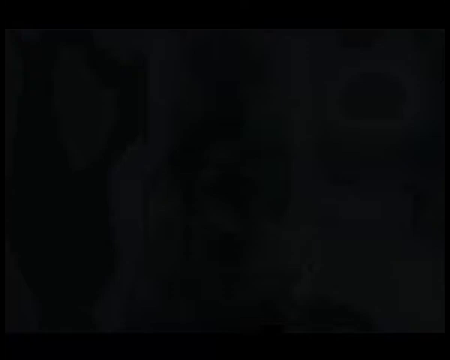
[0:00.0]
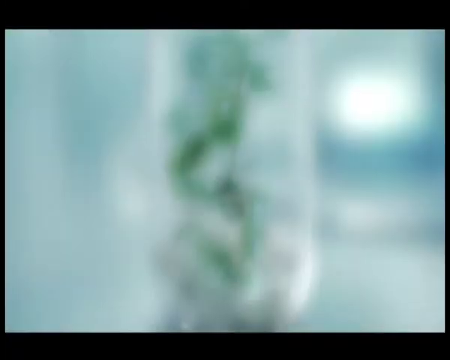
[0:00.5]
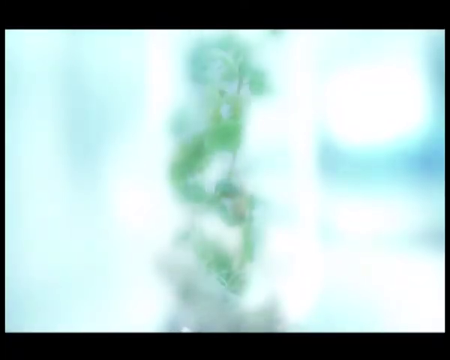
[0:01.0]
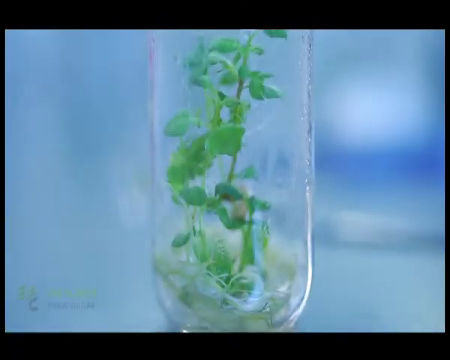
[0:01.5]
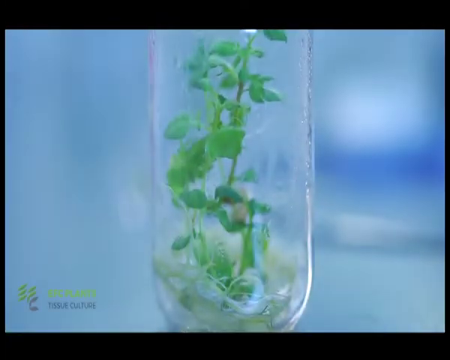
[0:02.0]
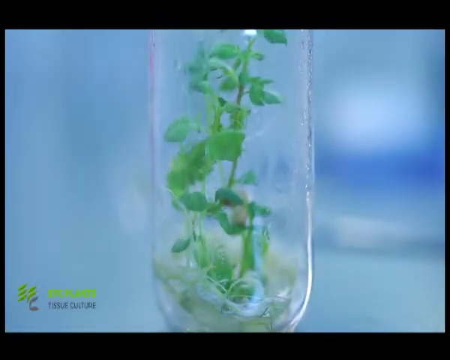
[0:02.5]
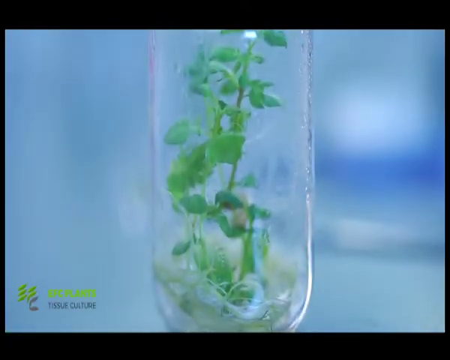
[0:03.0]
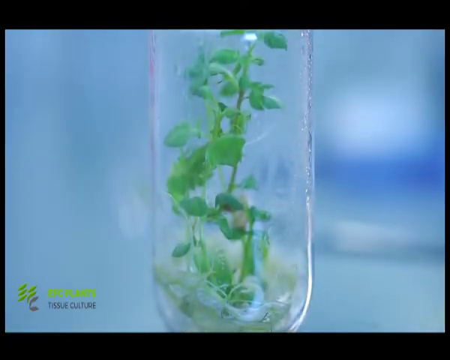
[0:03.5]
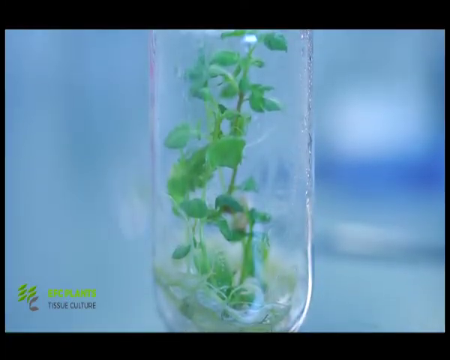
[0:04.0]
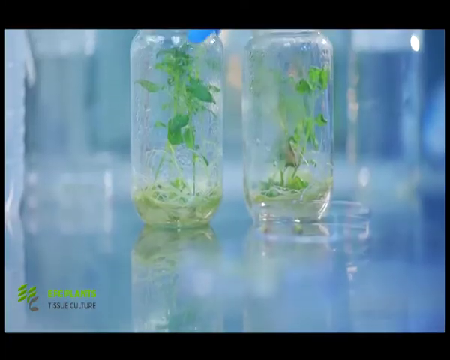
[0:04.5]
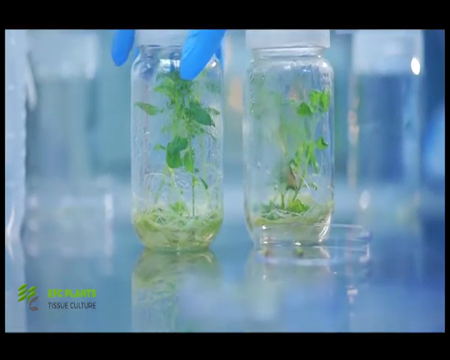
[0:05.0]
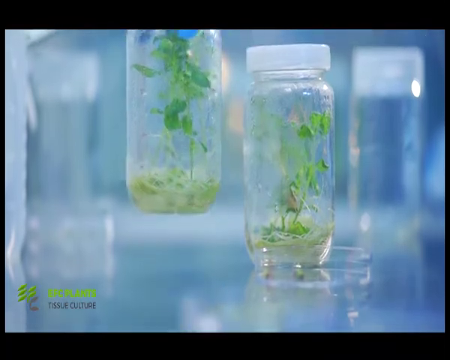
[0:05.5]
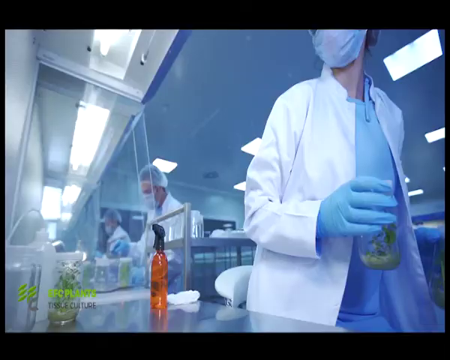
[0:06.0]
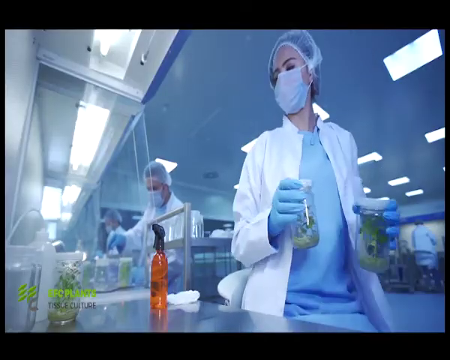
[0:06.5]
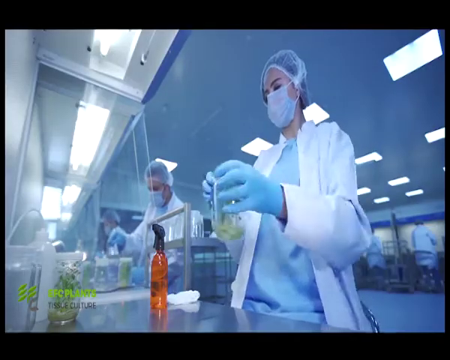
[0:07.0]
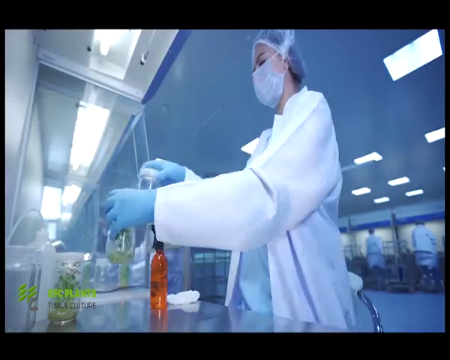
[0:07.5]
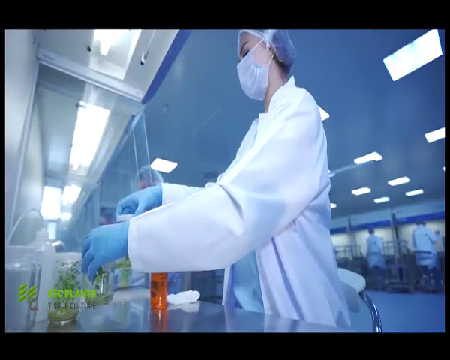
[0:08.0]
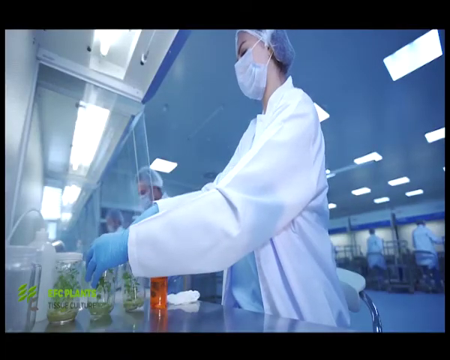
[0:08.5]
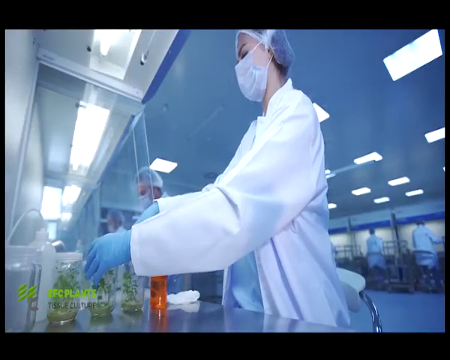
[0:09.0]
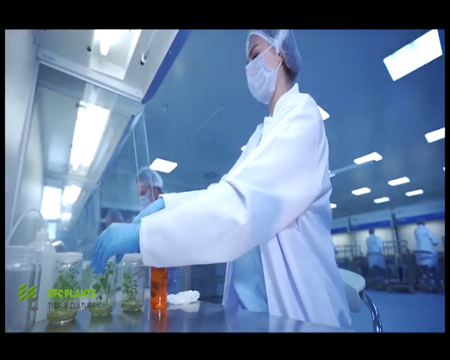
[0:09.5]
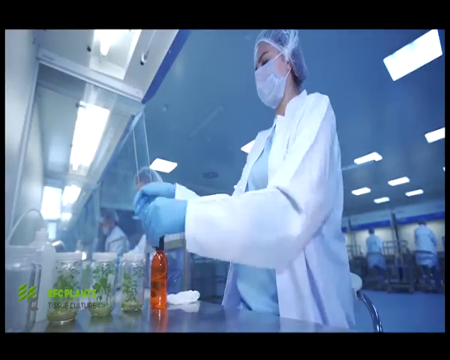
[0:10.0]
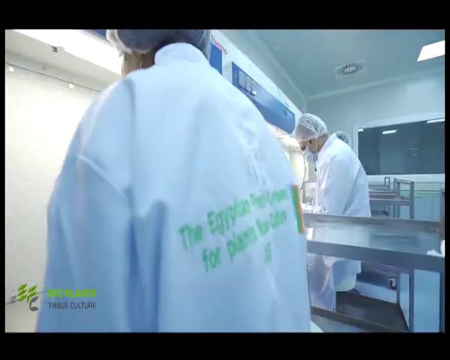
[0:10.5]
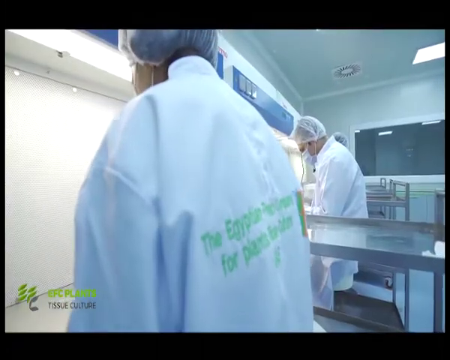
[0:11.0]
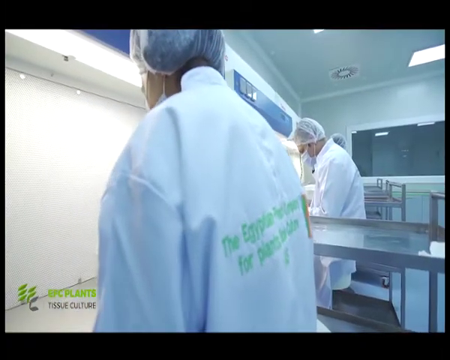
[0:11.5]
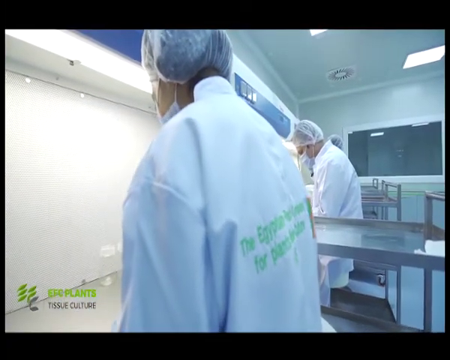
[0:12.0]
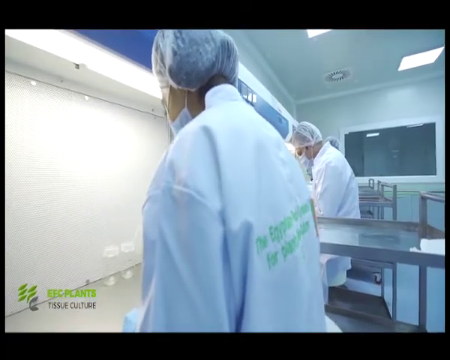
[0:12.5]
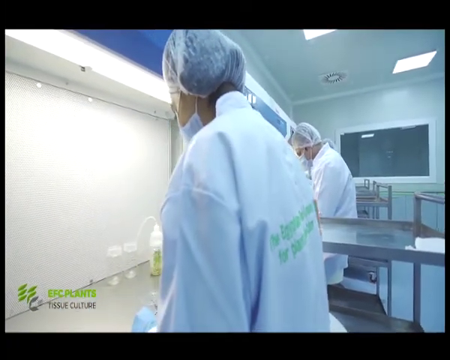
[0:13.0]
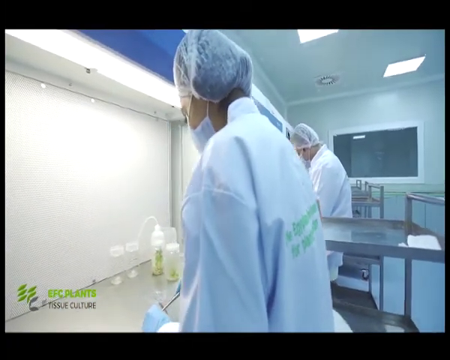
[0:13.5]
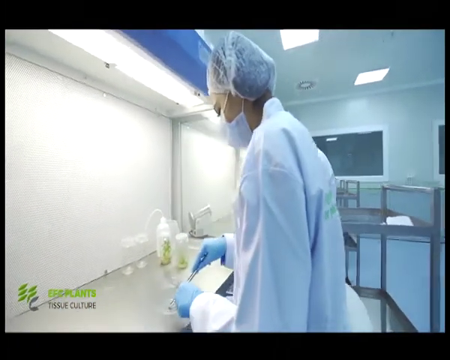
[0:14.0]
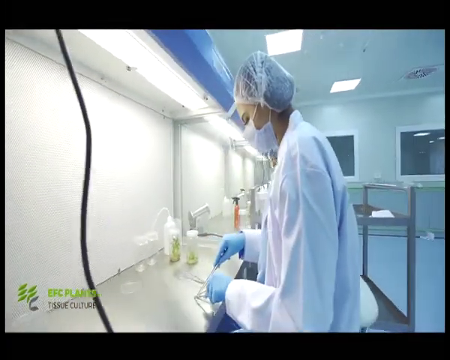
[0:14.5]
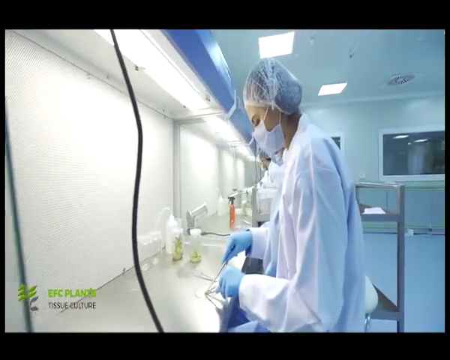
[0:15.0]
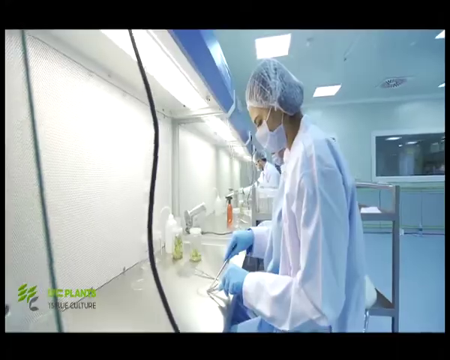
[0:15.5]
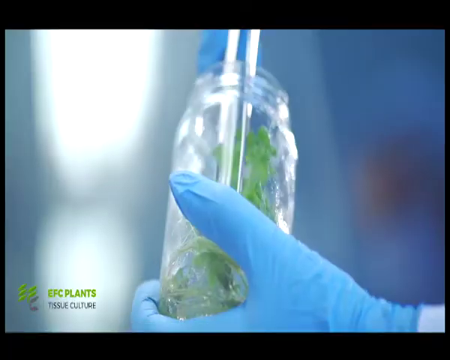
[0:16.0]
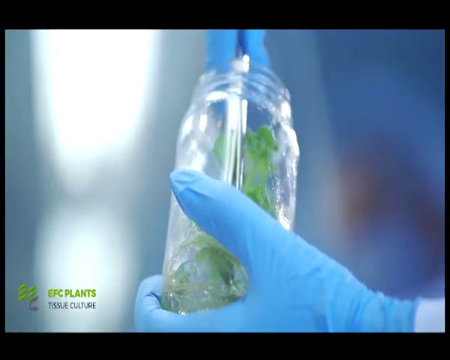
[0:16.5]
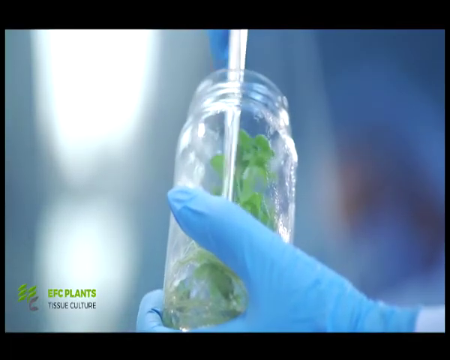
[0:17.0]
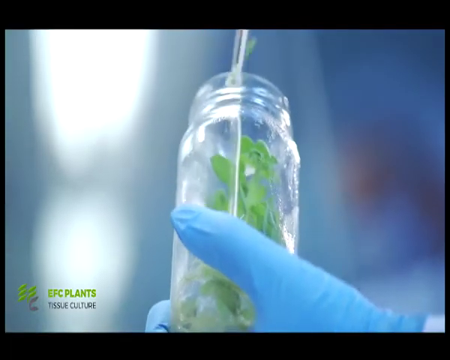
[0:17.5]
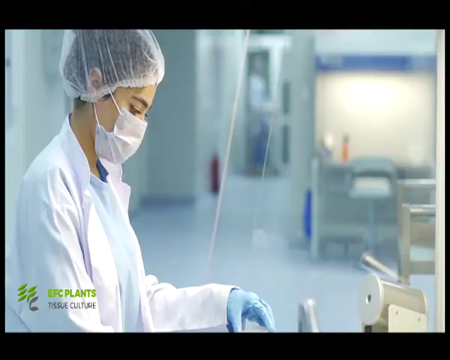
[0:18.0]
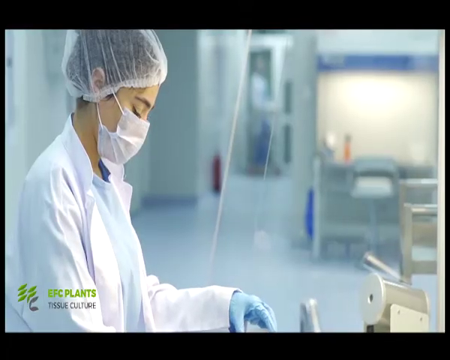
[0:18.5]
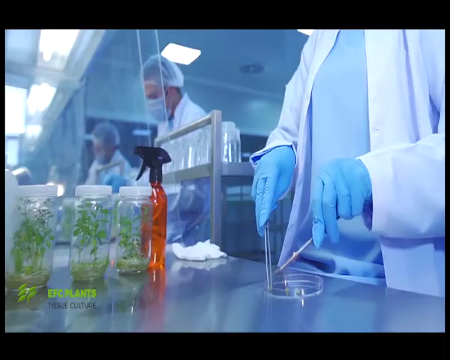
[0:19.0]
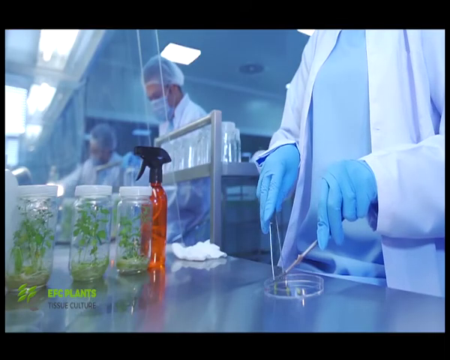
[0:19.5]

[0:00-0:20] A green plant grows inside a glass jar with a white lid. As the camera pans out, two jars come into view, plus one more jar that is empty, making three jars in all. The first jar on the left, with the green plant, is picked up. A person dressed in a white lab coat, blue gloves, a mask and protective hair covering is working in a laboratory. Two more people are to the left, and two others are in the background on the right side. On the table in front of the scientist is a tall orange sprayer bottle. She puts the glass jar on the table in front of her. A different view of the room shows two people, also dressed in lab clothes, working with what looks like long metal tweezers. A closer view of the jar with the plants follows: a piece of the green plant is pulled out with a pair of tweezers and then put in a petri dish.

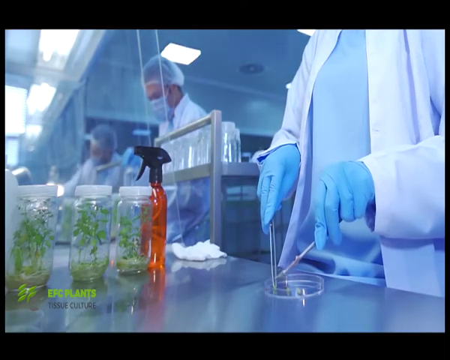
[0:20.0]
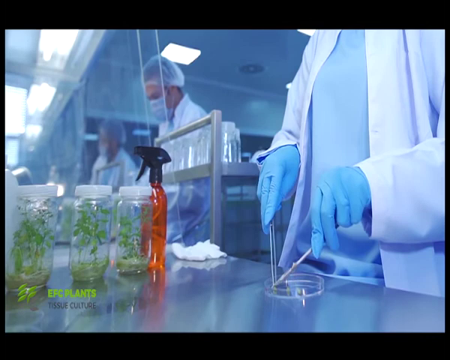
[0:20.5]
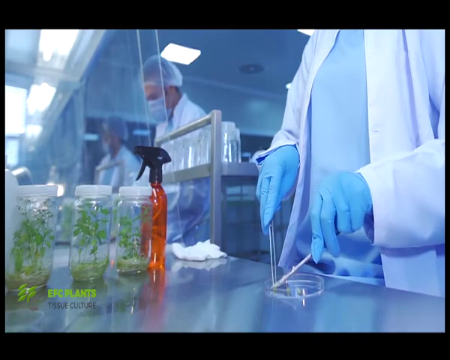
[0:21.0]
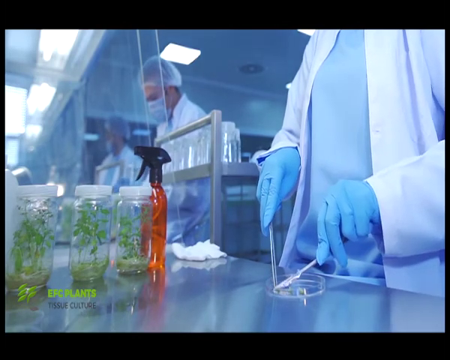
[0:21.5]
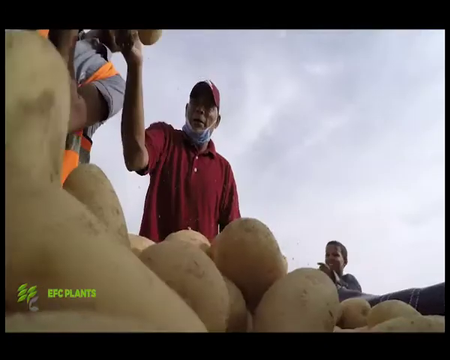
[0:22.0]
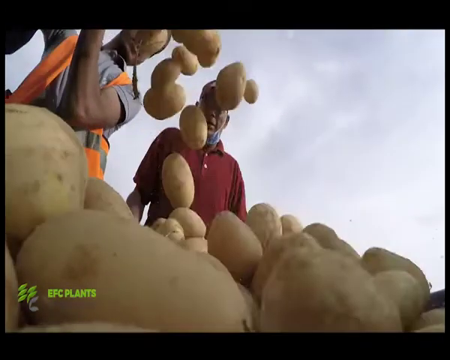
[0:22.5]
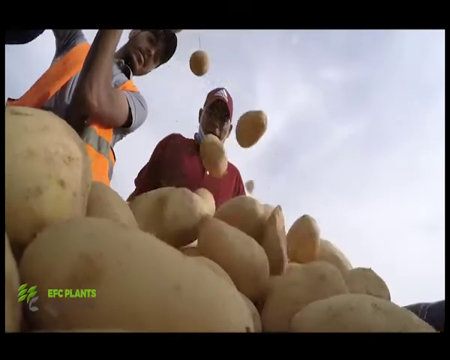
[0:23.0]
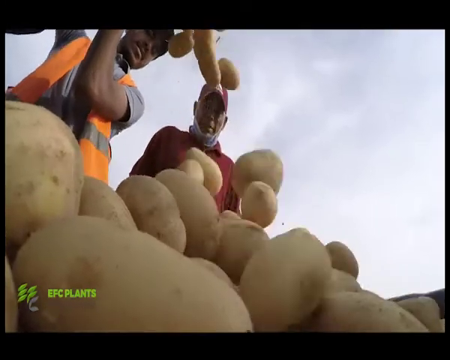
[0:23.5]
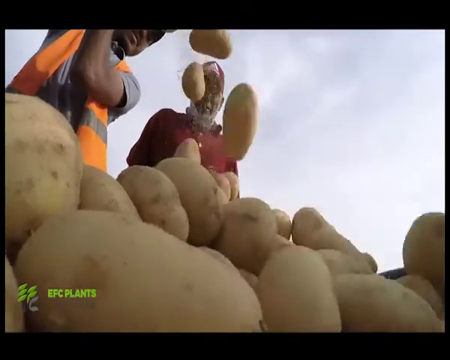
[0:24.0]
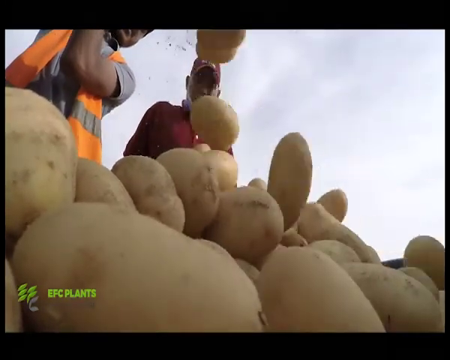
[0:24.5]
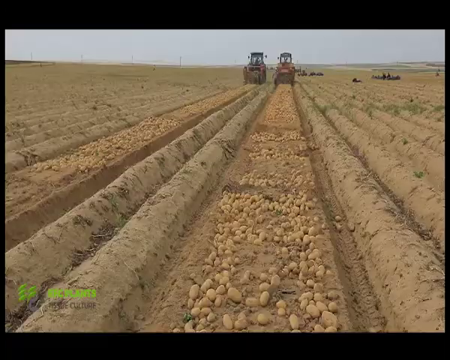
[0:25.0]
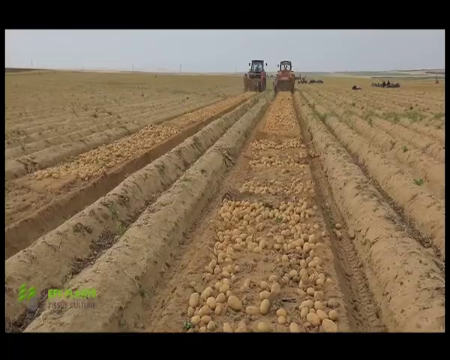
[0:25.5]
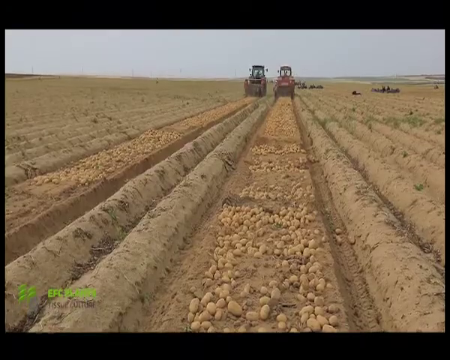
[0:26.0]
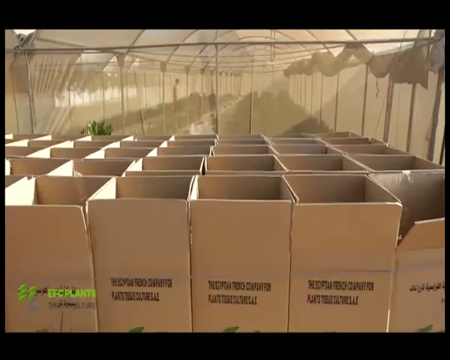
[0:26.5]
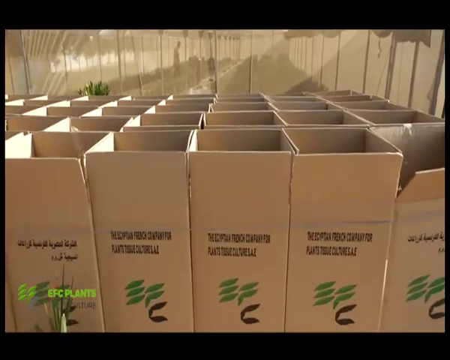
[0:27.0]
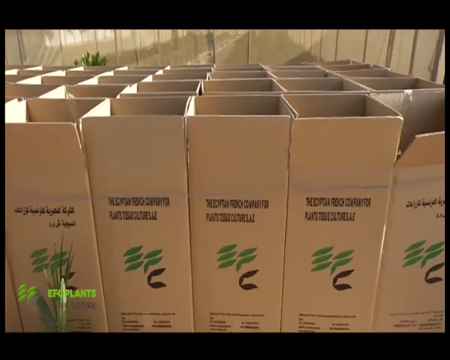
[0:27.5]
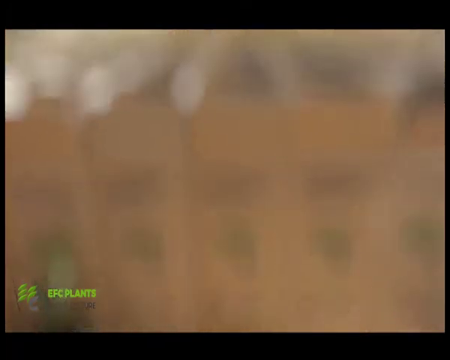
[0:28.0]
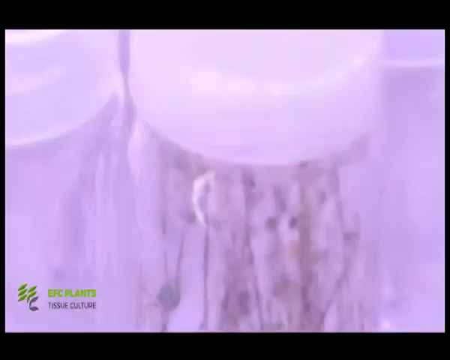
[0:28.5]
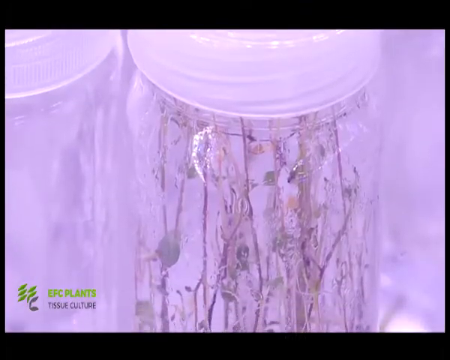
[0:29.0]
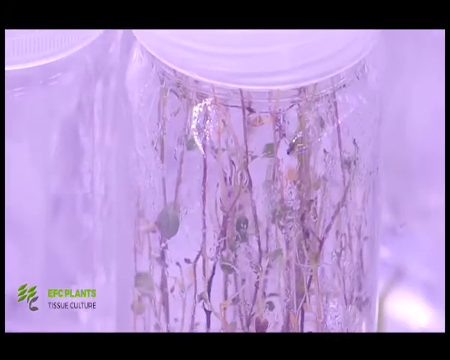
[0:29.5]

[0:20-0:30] A pair of gloved hands belonging to someone in a lab coat hold tweezers, one in each hand, and work on something in a clear petri dish. The view shows the person only from the chest down to the metal table in front of them. On the left side, two other people, also dressed in laboratory coats, hair protection and masks, seem to be working diligently too. On the table in the foreground on the left are three clear jars with white plastic covers and green plants inside. An orange bottle with a black sprayer top is beside the jars. The person uses the tweezers to cut up something in the petri dish. Next, a view from below looking upward shows two men standing and watching as potatoes are poured by the man on the left, and the potatoes pile up. A large farm follows, with two tractor trailers driving down the land. Then what looks like small plant stems grow inside a glass jar.